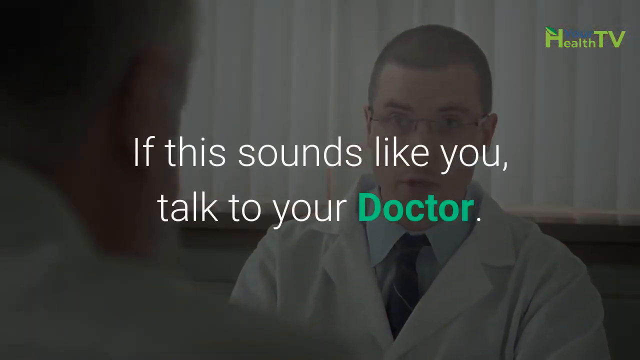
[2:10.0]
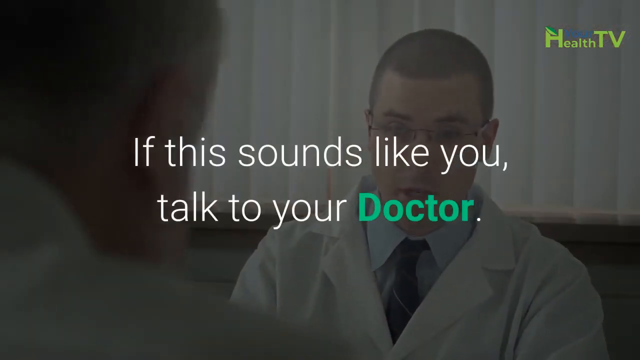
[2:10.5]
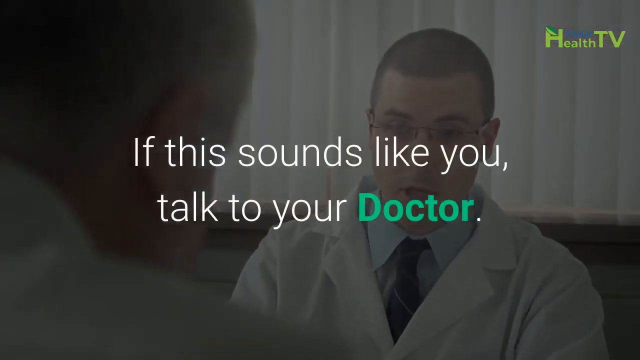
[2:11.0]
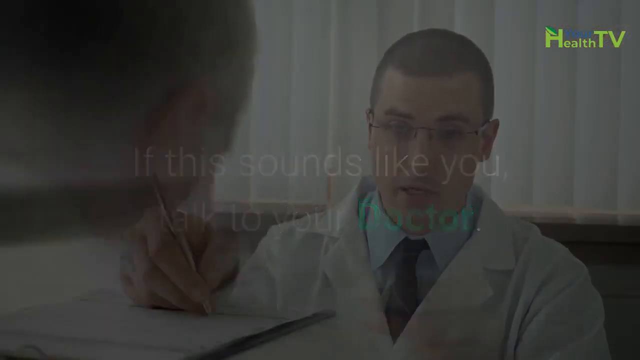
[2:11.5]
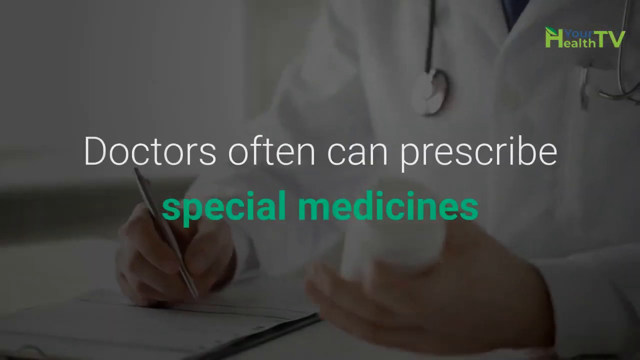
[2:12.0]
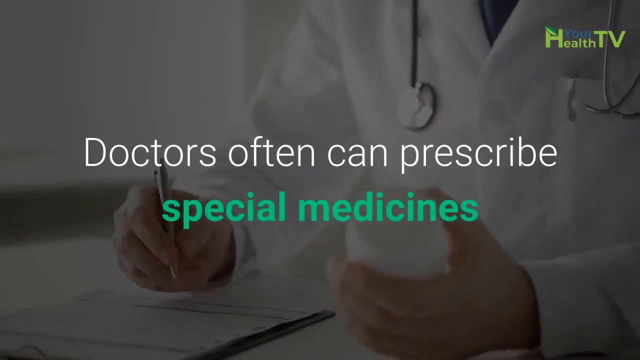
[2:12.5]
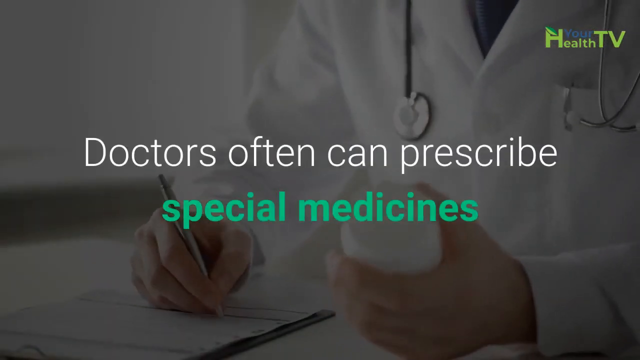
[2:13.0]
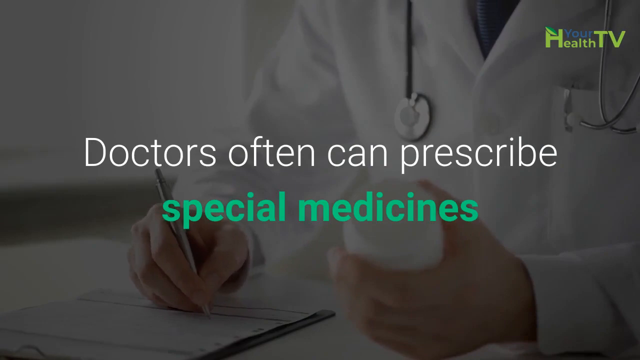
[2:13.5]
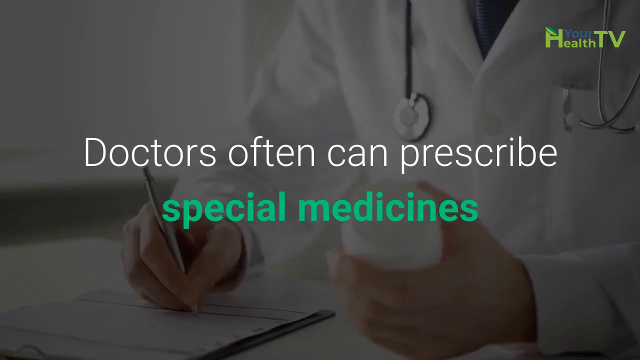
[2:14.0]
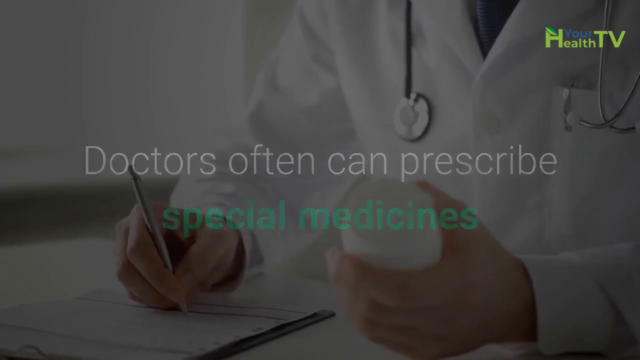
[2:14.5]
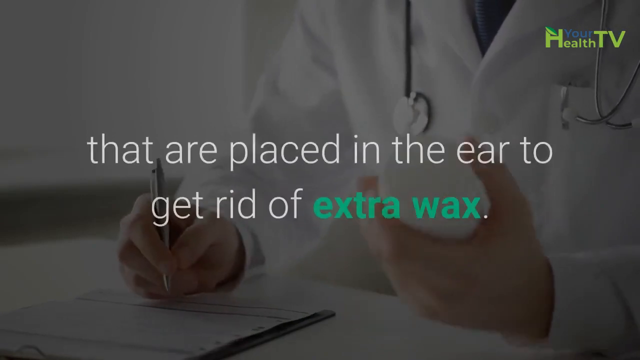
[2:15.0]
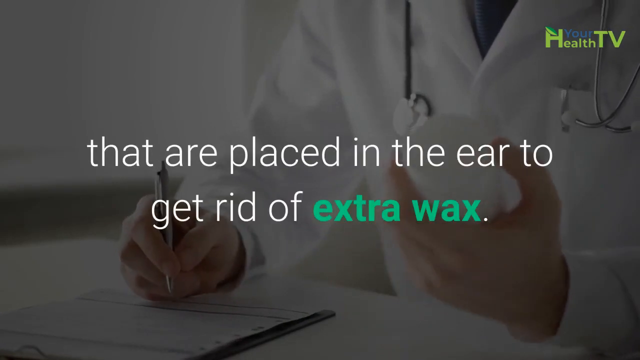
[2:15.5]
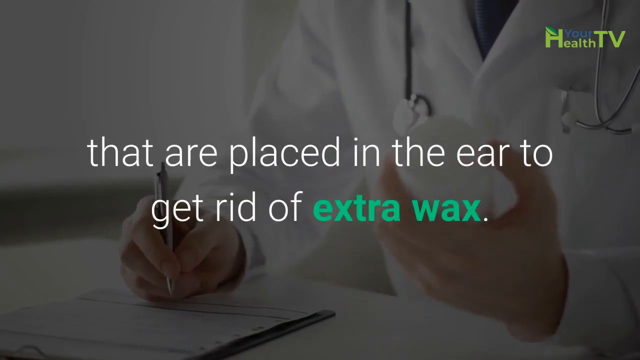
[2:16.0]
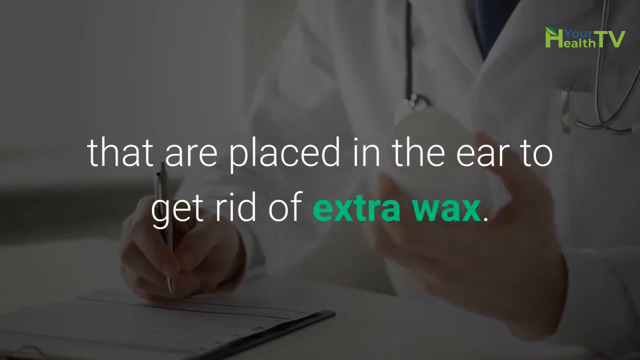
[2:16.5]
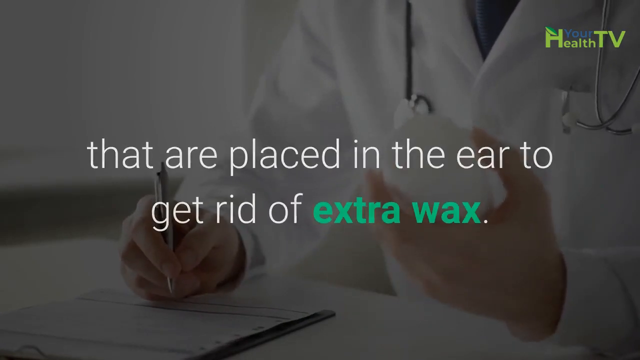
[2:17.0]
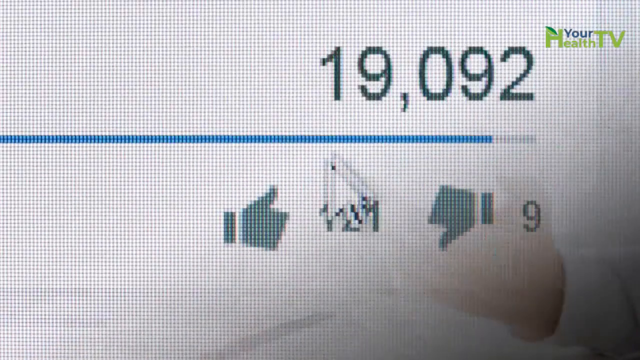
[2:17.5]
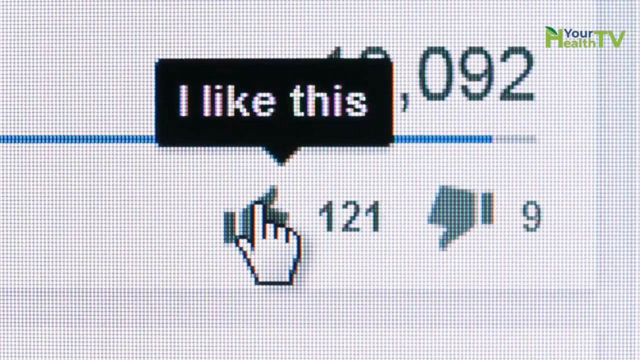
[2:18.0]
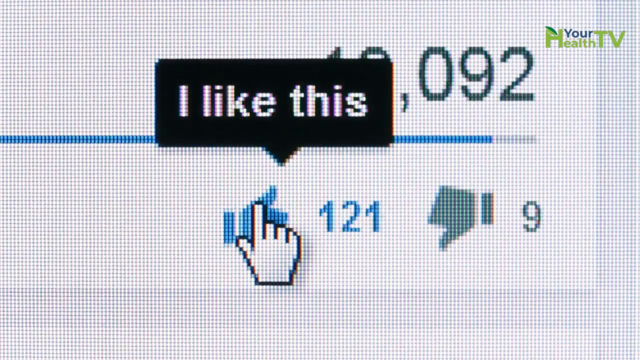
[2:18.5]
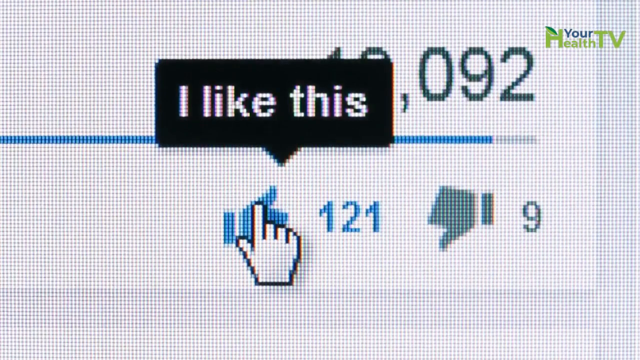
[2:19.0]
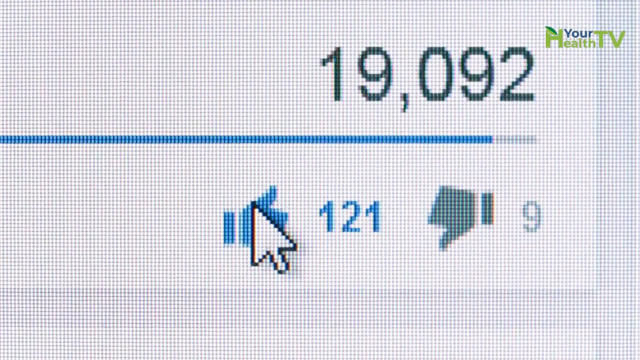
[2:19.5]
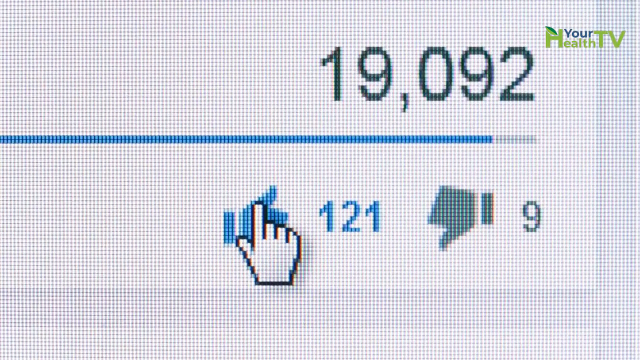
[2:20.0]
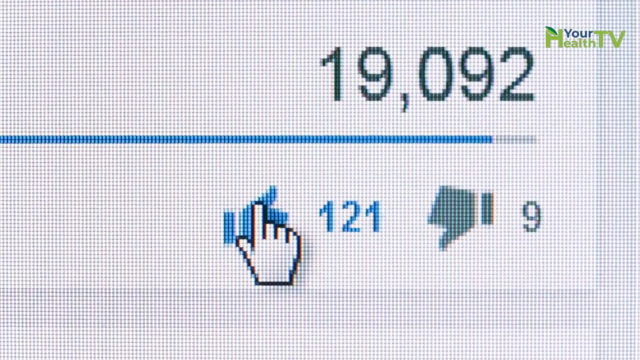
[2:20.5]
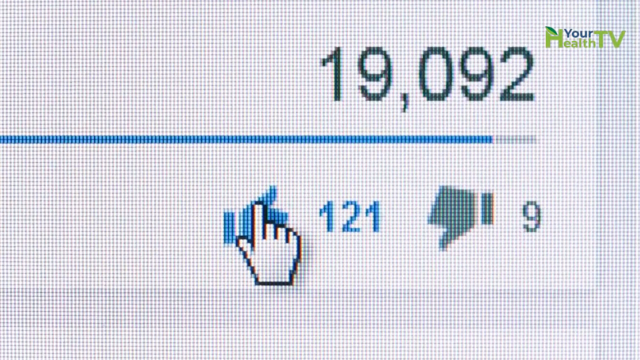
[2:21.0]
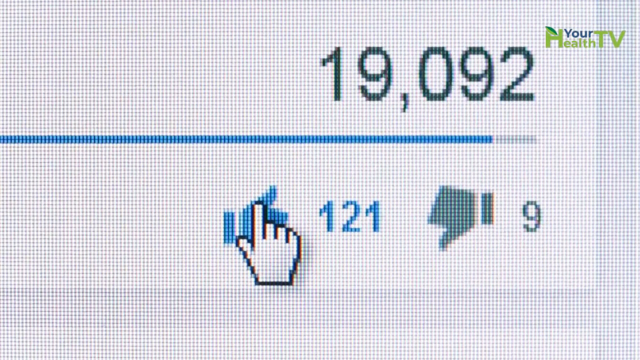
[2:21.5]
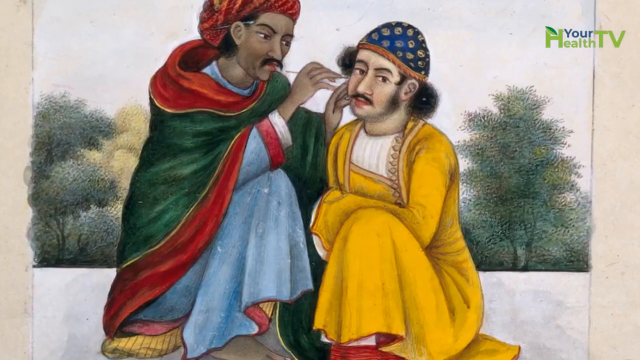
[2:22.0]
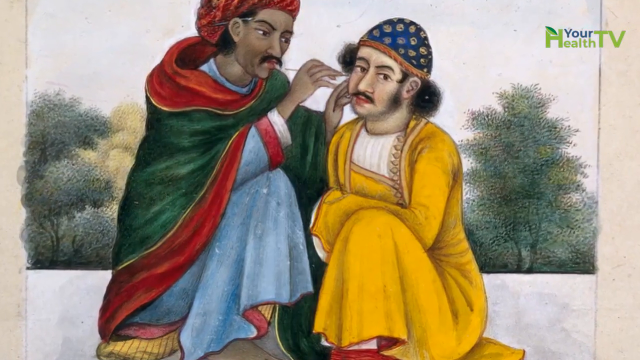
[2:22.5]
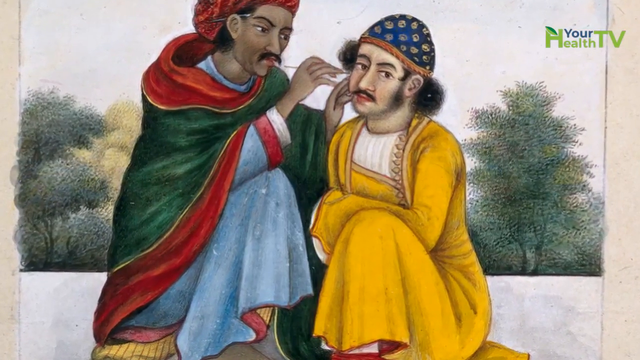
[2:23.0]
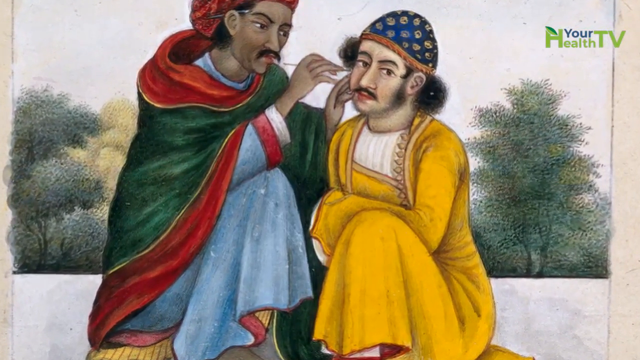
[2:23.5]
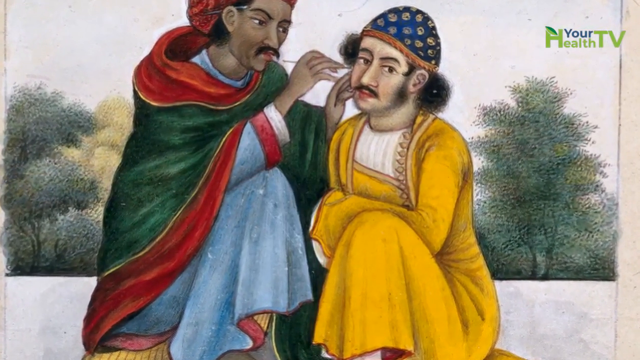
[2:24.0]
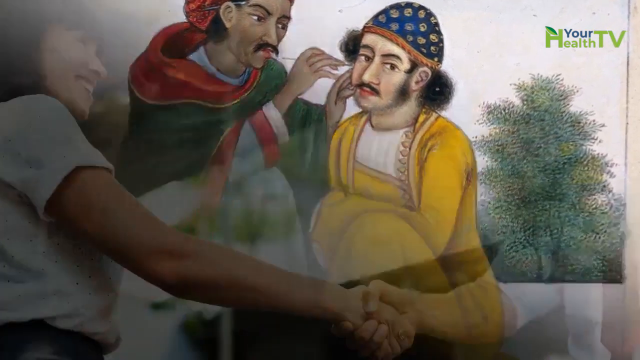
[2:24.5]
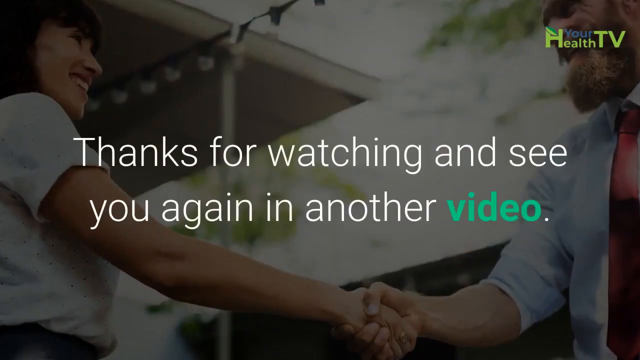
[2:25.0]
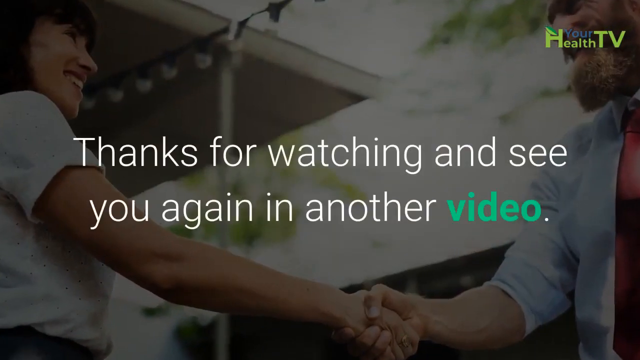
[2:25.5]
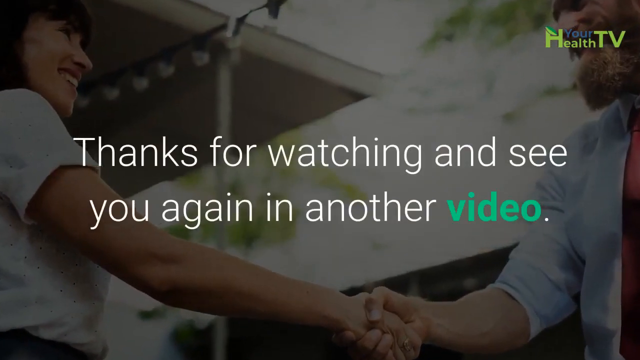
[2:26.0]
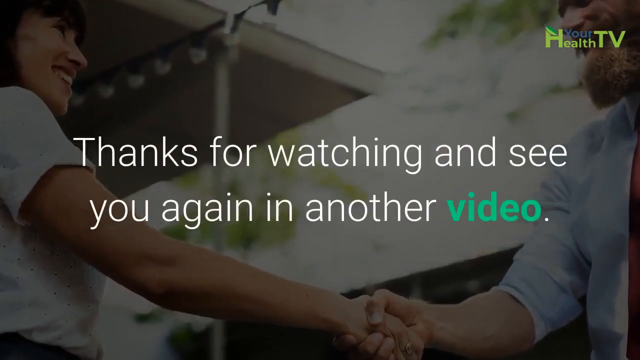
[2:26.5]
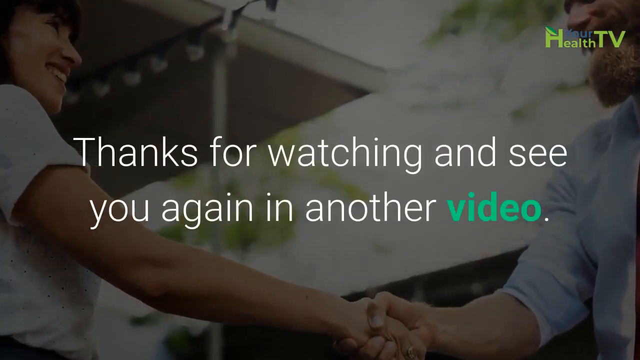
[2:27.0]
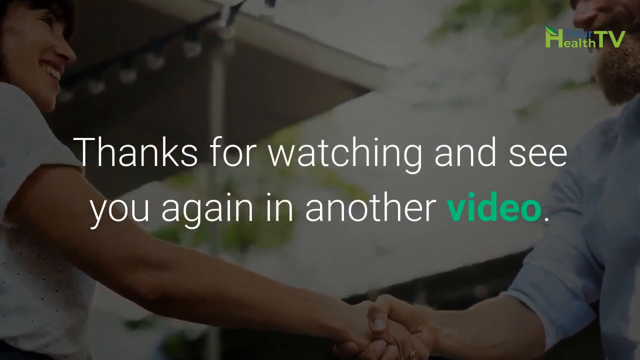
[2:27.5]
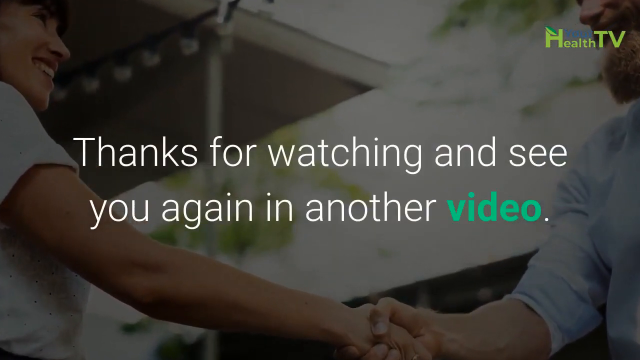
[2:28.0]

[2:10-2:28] An image shows someone portraying a doctor: a Caucasian person with a close-cropped haircut and glasses, wearing a white coat, a button-up shirt and a tie. He faces the camera in the center of the screen, looking toward his patient, whose back is seen on the left side of the screen. Next, a video shows a person in a lab coat with a stethoscope over their shoulders, a pen in the right hand, a paper in front of them, and what looks like a pill bottle in the left hand. Text reads "doctors often can prescribe special medicines that are placed in the ear to get rid of earwax." Then a prompt appears encouraging a thumbs up, showing "19,092", possibly the number of viewers, 121 thumbs up and 9 thumbs down, with the cursor selecting the thumbs-up button. The earlier illustration of a Middle Eastern man or doctor cleaning debris out of another man's ear appears again. It ends with a woman on the right and a man on the left shaking hands, and the text "thanks for watching and see you again in another video."